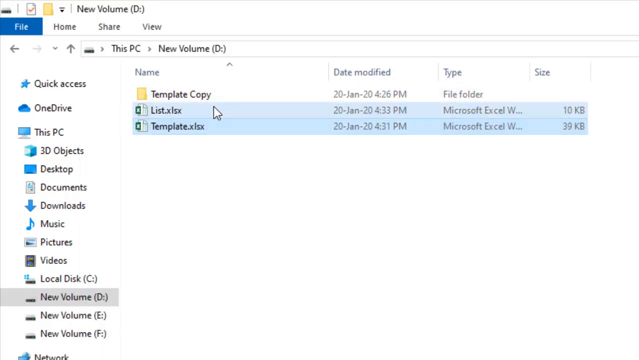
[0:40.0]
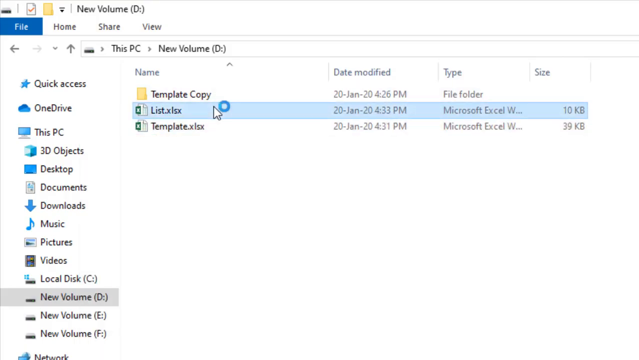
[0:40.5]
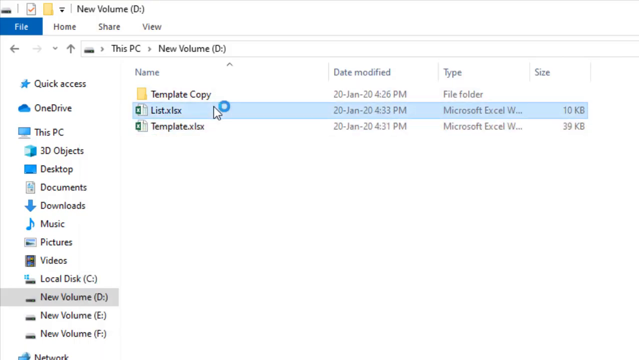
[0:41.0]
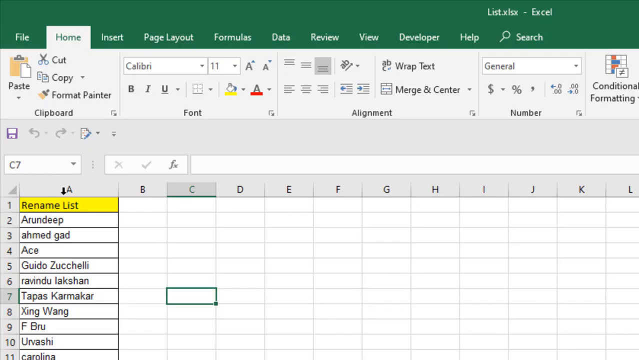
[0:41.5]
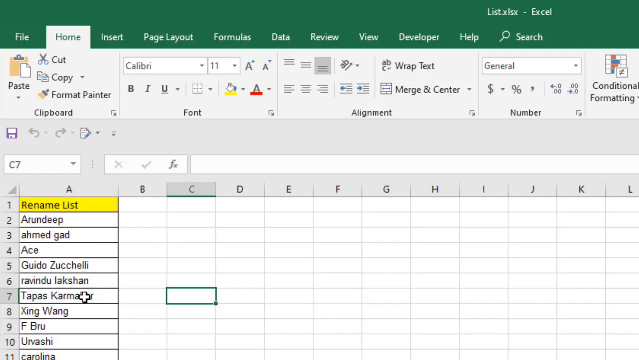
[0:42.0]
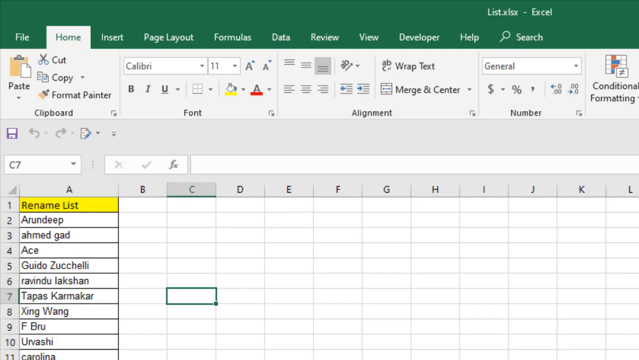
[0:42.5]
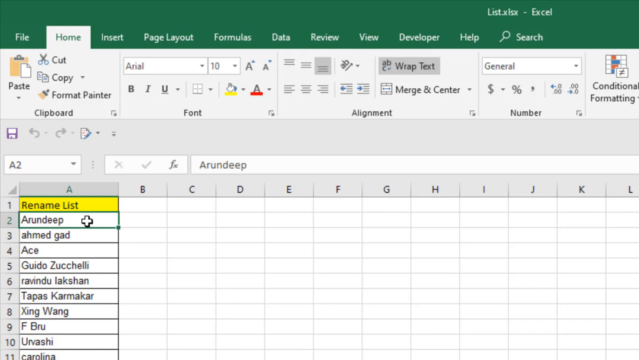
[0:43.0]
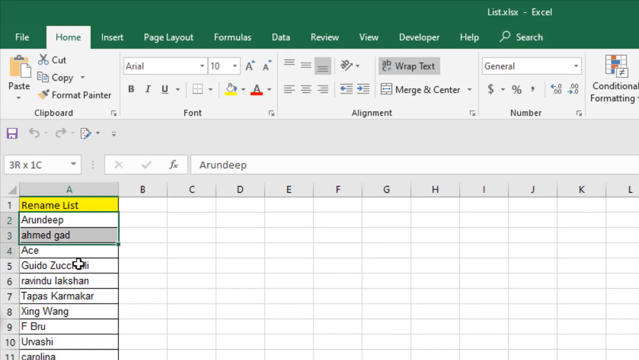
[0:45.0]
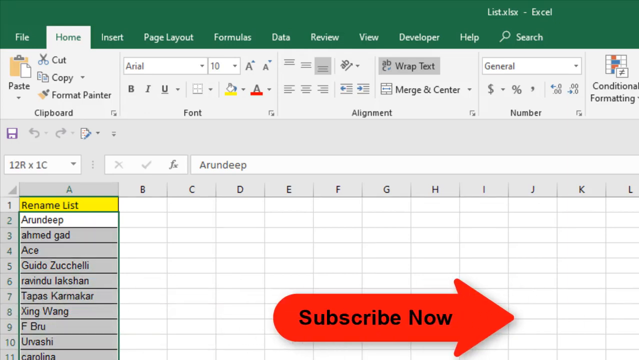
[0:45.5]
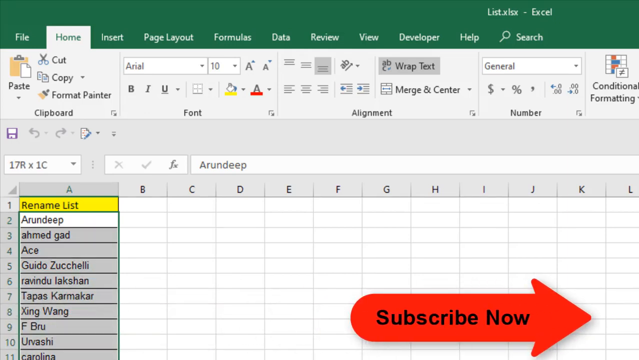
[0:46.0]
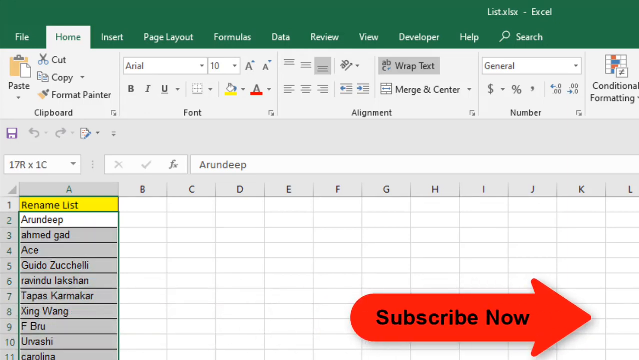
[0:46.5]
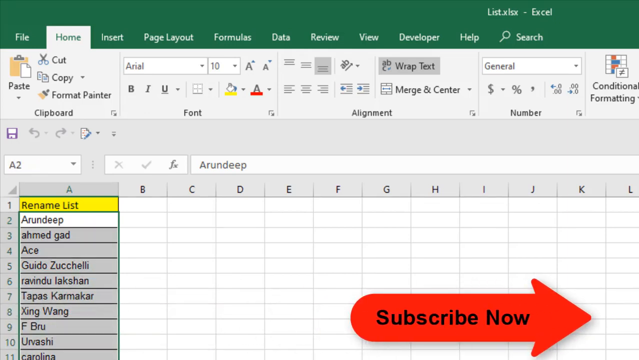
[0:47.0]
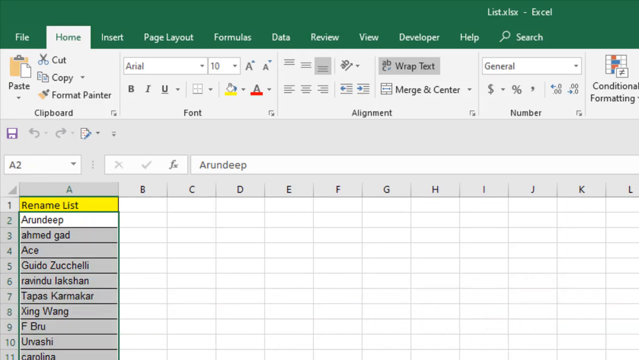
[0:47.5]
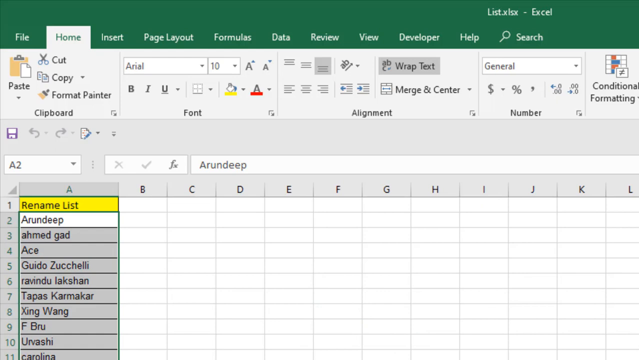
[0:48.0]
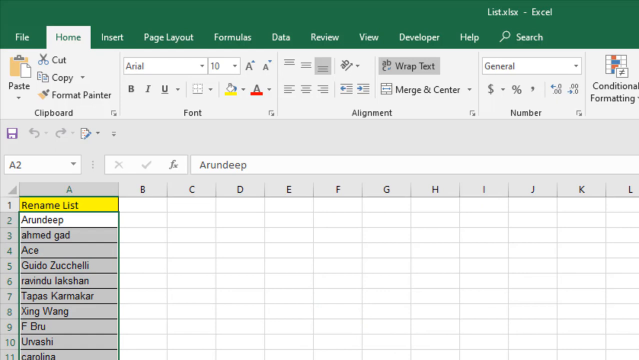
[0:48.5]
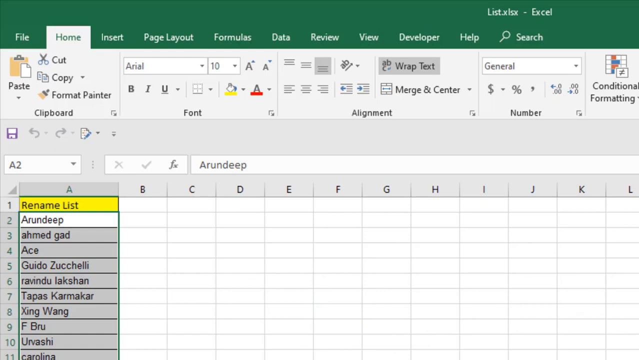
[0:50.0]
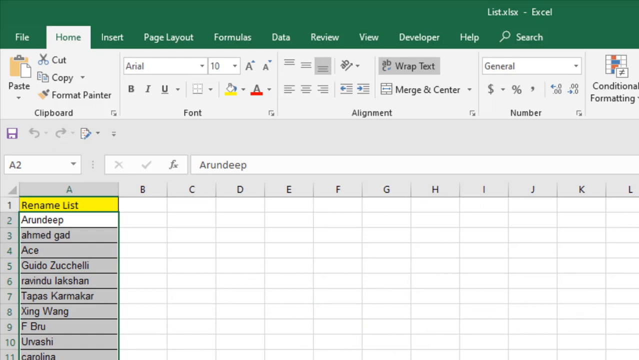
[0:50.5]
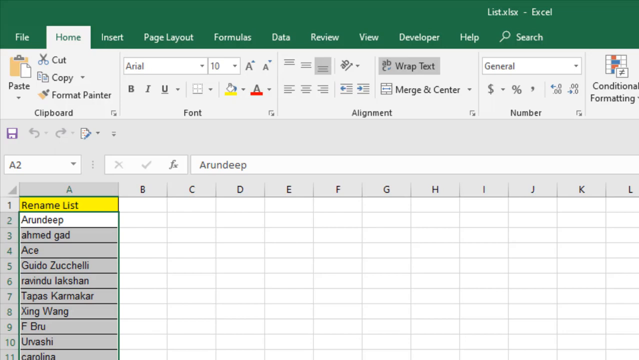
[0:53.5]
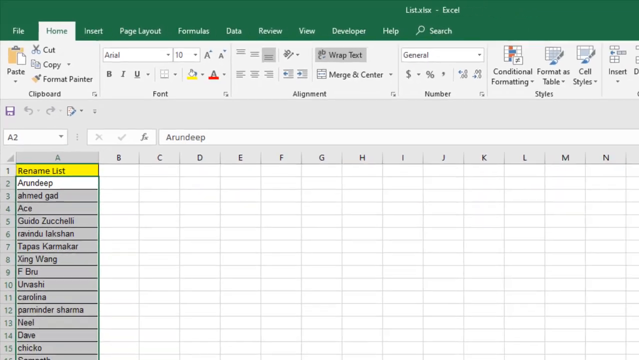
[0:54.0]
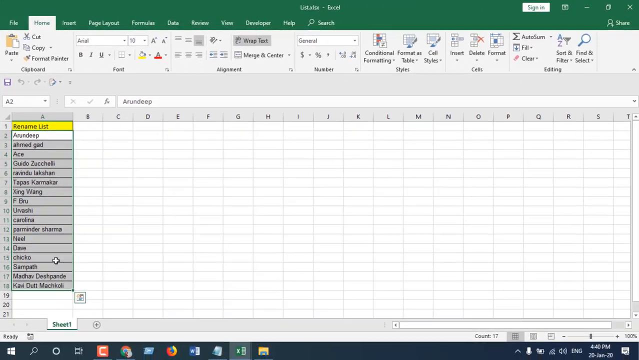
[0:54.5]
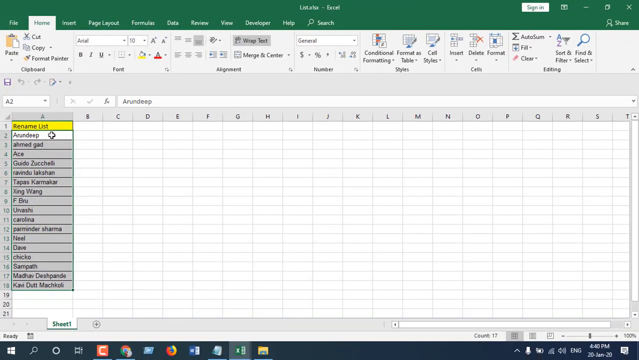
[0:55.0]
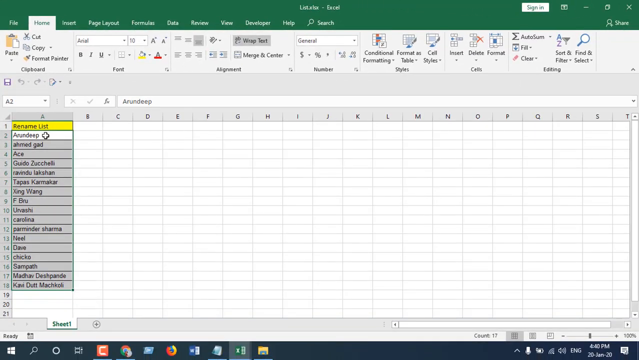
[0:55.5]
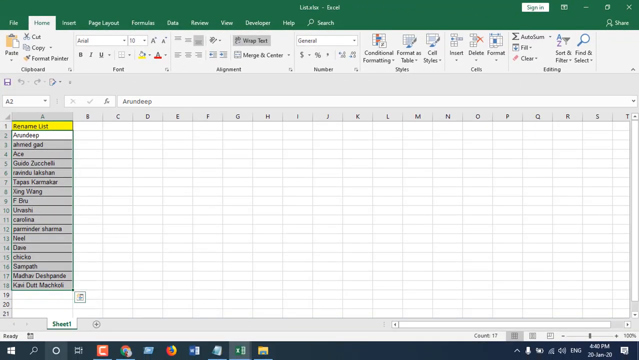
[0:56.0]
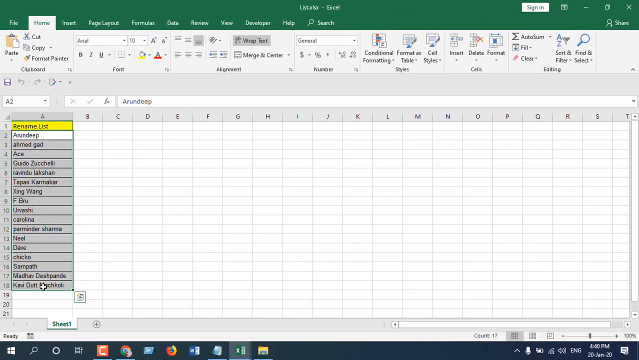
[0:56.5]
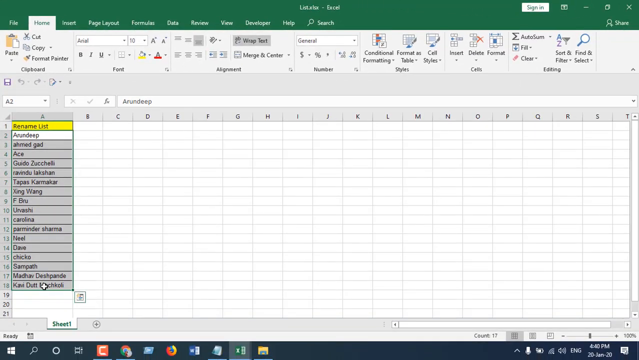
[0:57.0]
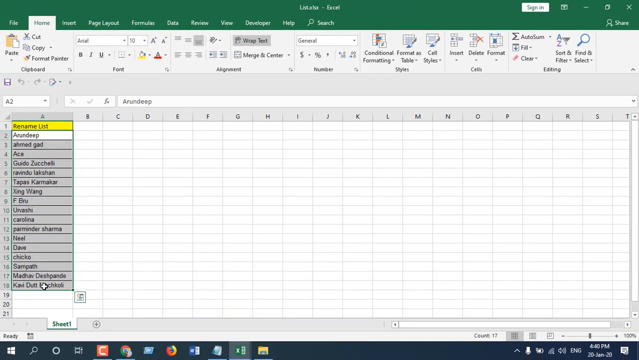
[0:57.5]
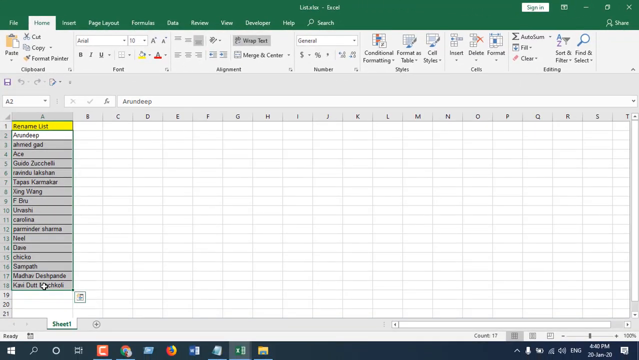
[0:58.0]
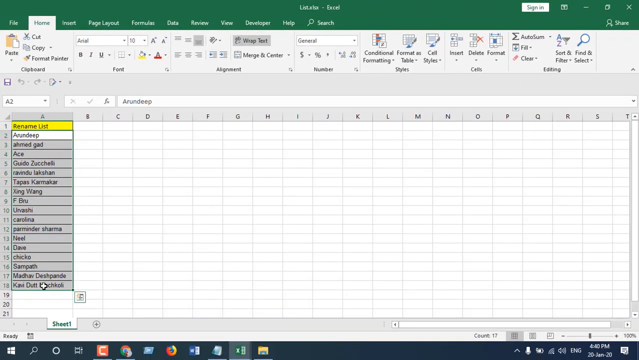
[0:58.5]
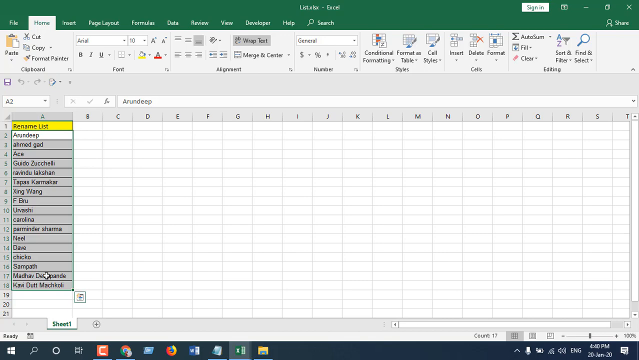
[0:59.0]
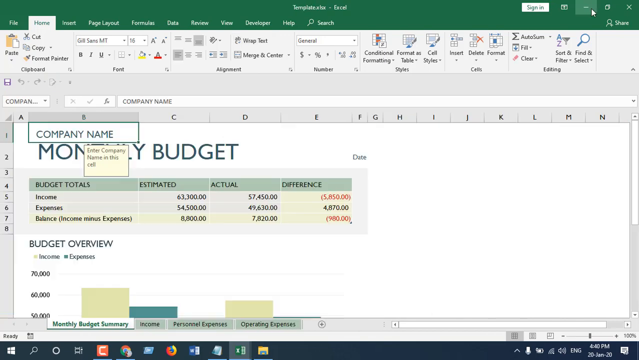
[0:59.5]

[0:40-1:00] The view zooms in on the files at the top. The mouse highlights both the list and template Excel sheets, then clicks the list sheet, which opens the Excel sheet titled list. Names are written down column A: row 1 reads "Renamed List" and is highlighted in yellow, row 2 is Ardeep, row 3 is Ahmed Gad, row 4 is Ace, row 5 is Guido Zuccelli, row 6 is Ravindu Lakshan, row 7 is Thomas Carbaker, row 8 is Zing Wang, and row 9 is F. Brew. The mouse starts highlighting each of the rows in column A, then the view zooms out to a longer list and all the rows are highlighted.